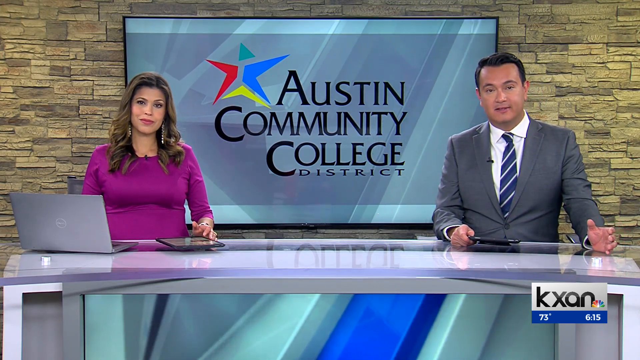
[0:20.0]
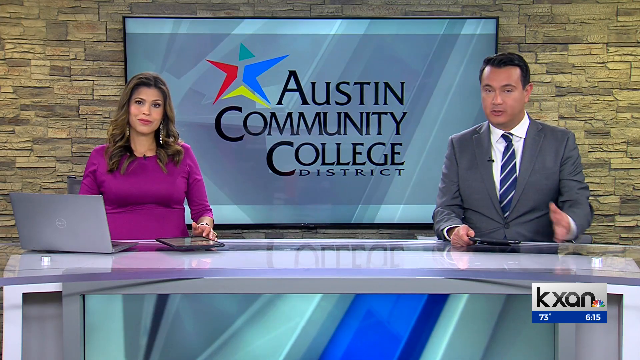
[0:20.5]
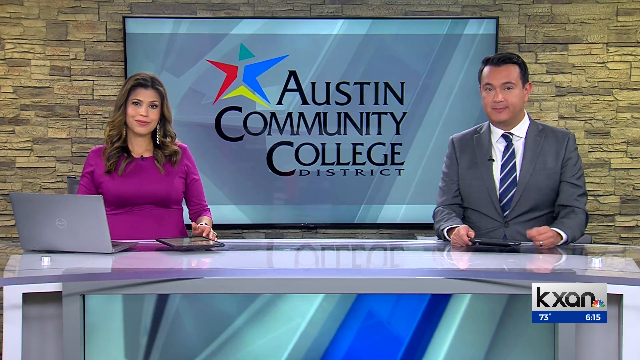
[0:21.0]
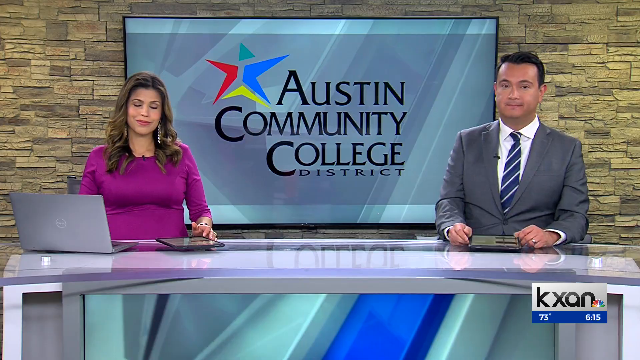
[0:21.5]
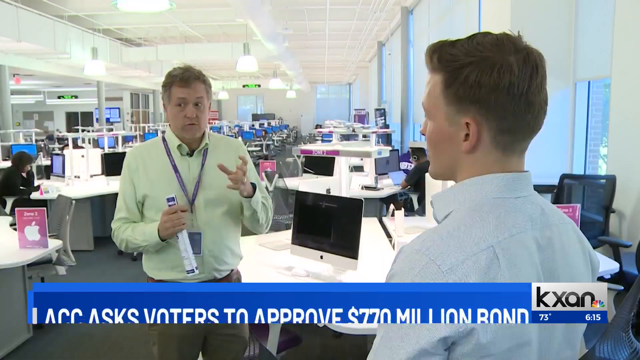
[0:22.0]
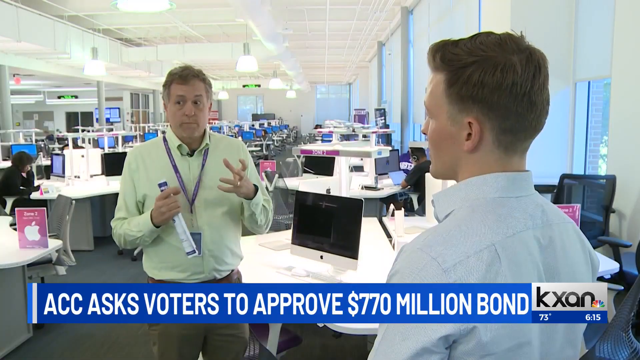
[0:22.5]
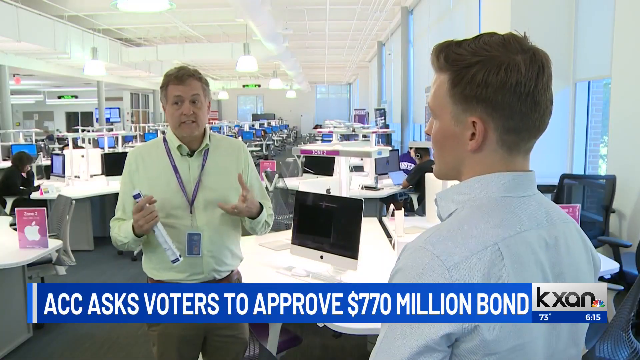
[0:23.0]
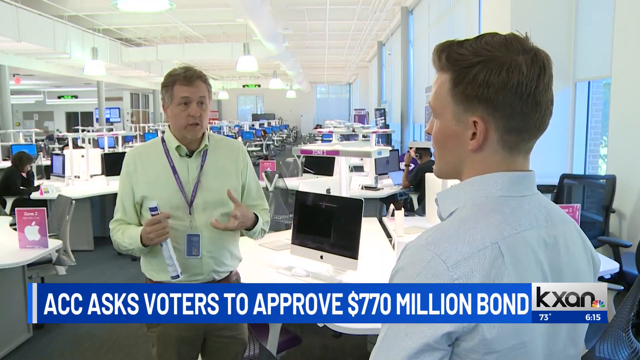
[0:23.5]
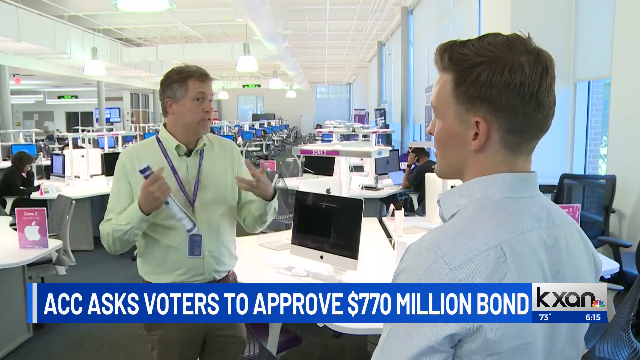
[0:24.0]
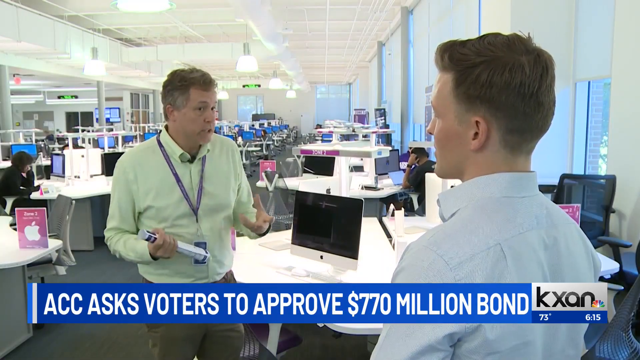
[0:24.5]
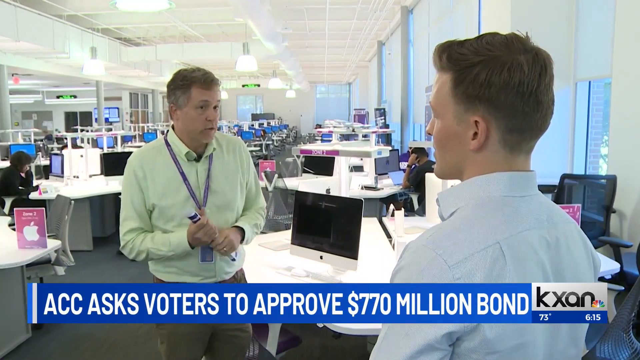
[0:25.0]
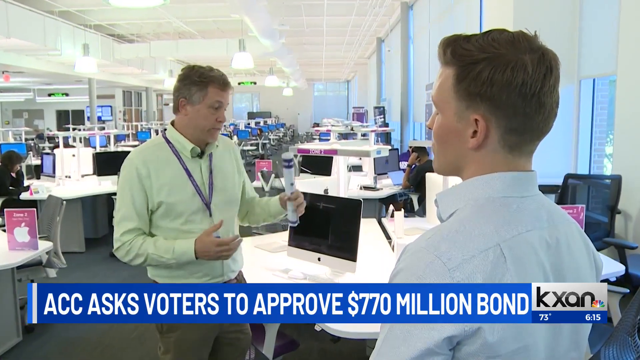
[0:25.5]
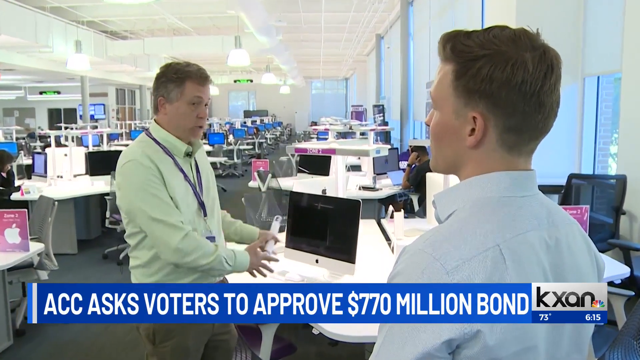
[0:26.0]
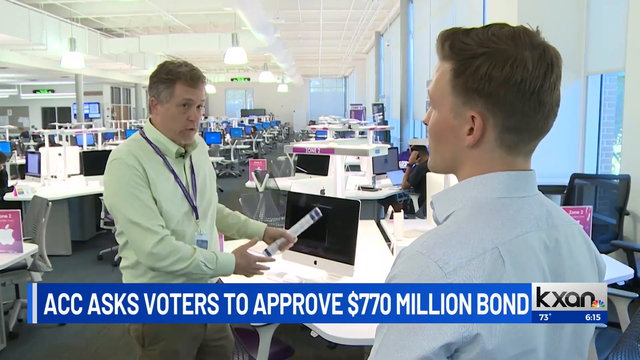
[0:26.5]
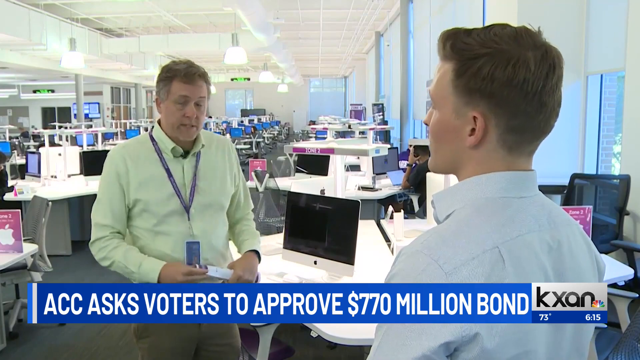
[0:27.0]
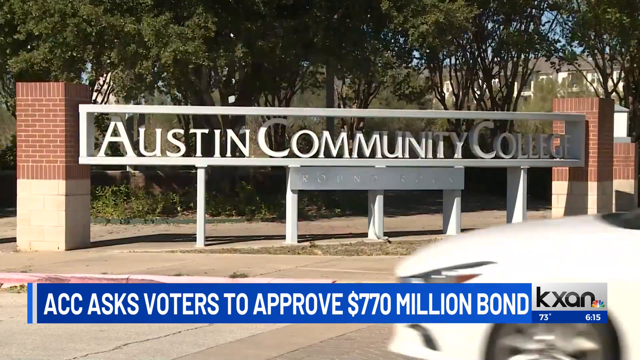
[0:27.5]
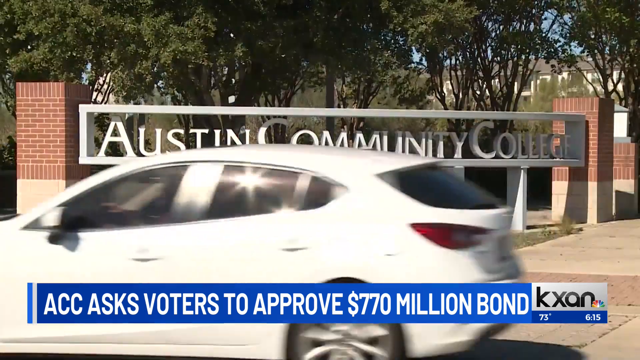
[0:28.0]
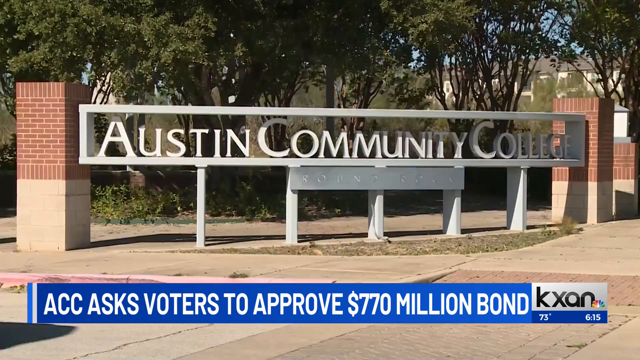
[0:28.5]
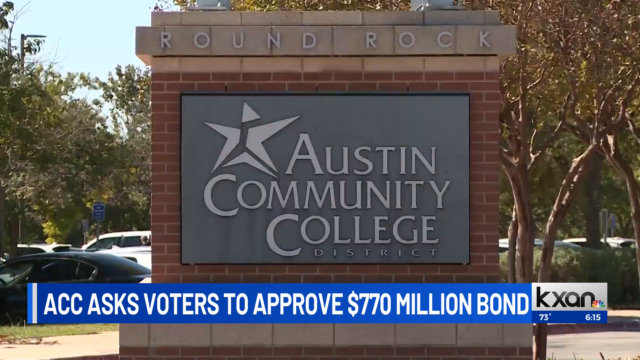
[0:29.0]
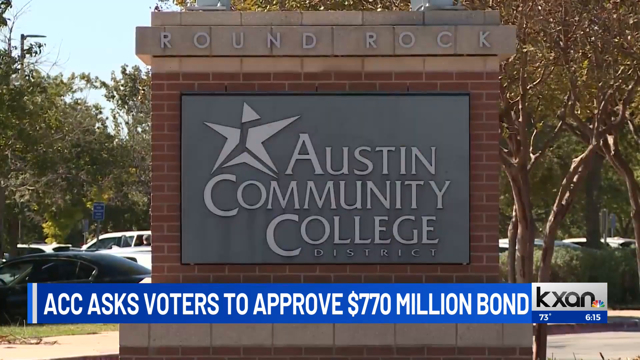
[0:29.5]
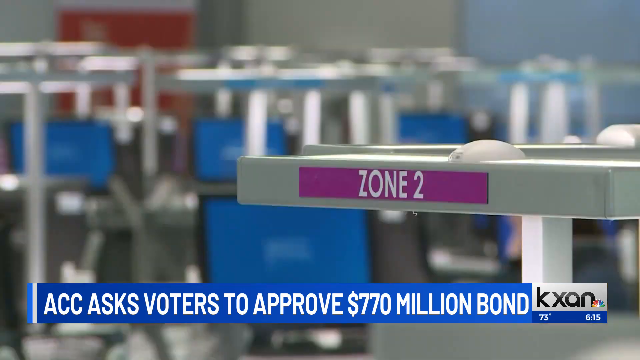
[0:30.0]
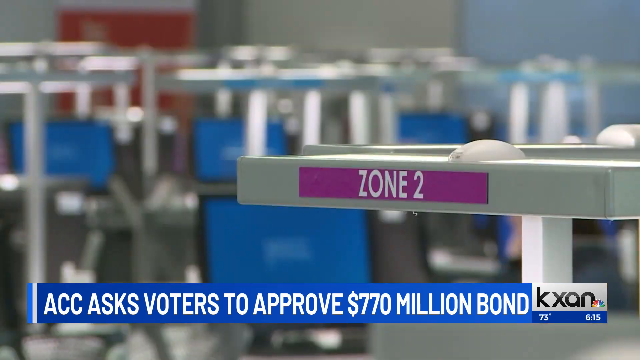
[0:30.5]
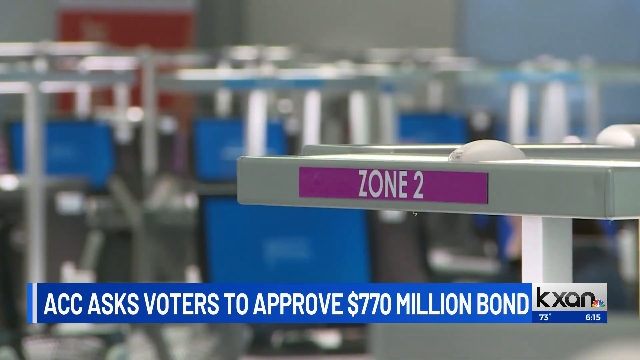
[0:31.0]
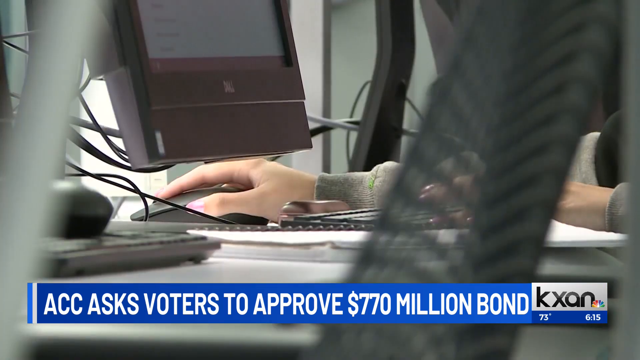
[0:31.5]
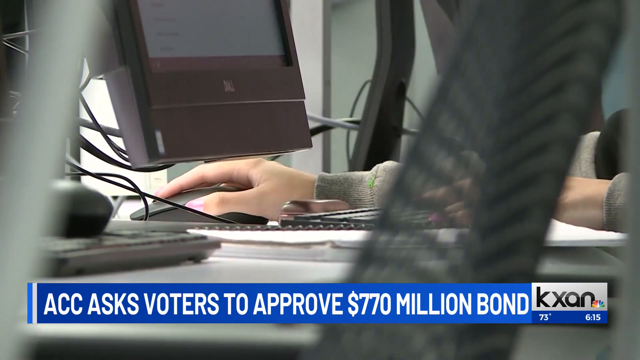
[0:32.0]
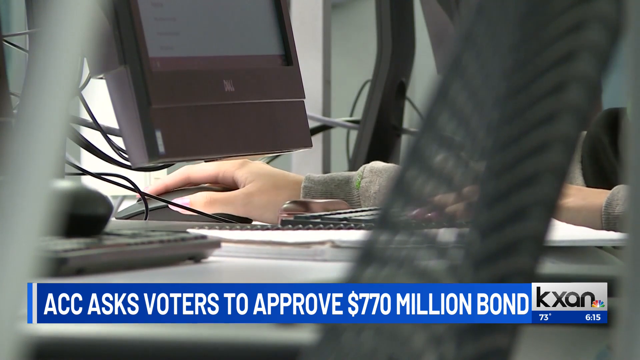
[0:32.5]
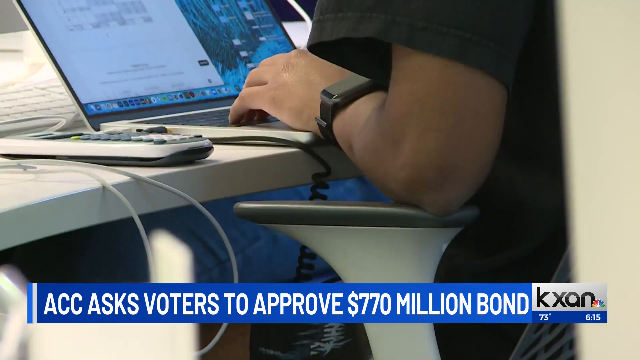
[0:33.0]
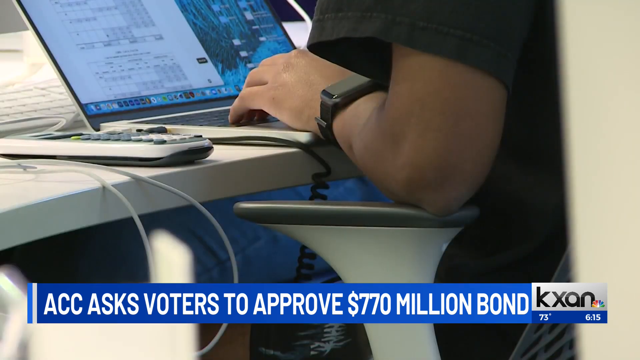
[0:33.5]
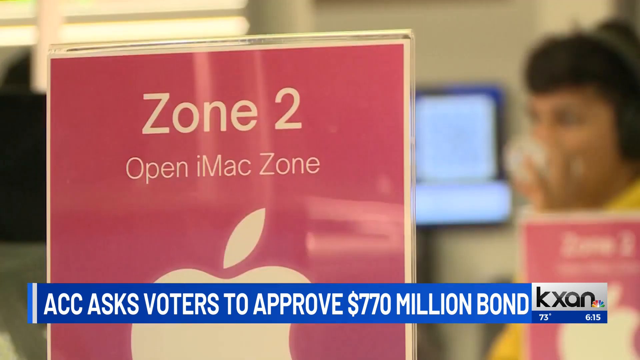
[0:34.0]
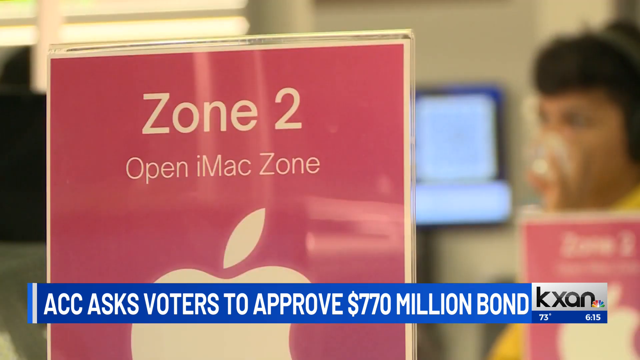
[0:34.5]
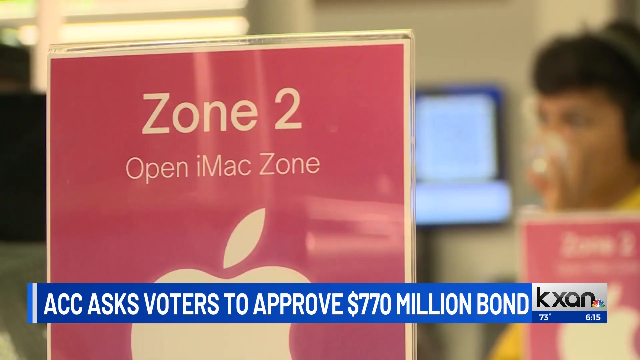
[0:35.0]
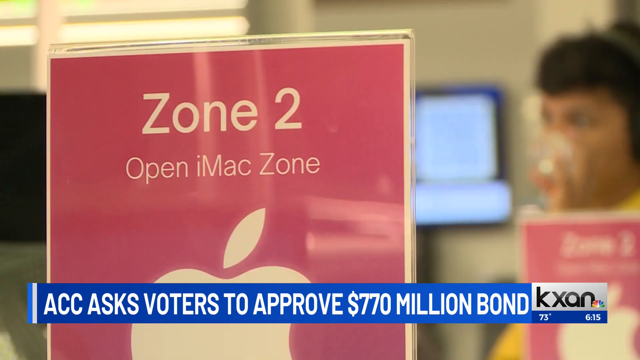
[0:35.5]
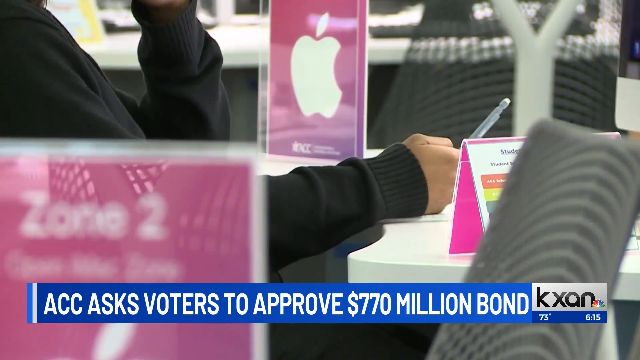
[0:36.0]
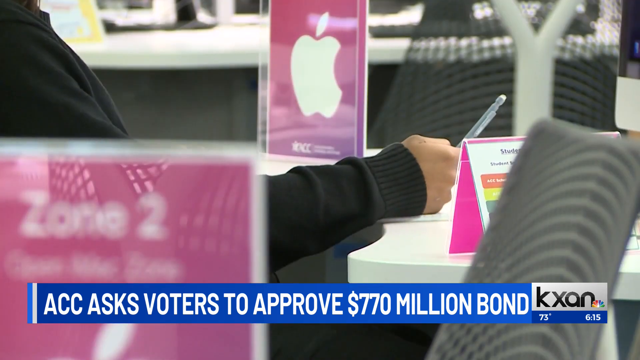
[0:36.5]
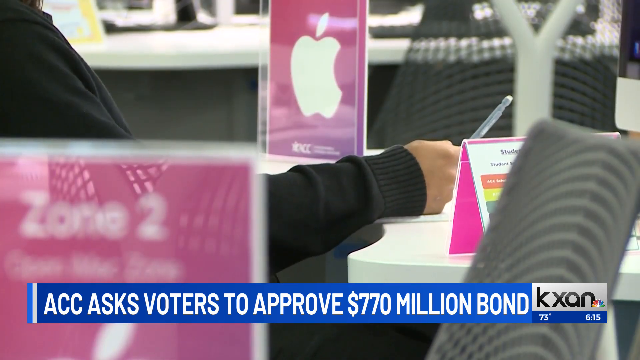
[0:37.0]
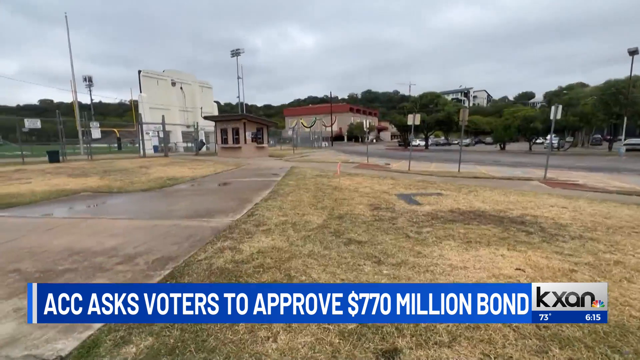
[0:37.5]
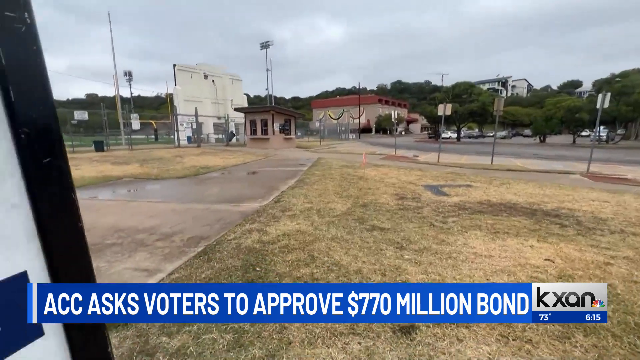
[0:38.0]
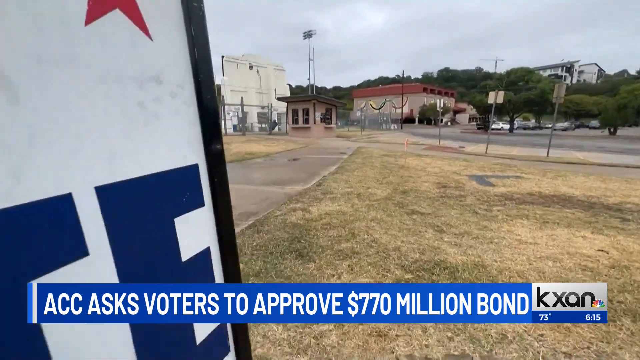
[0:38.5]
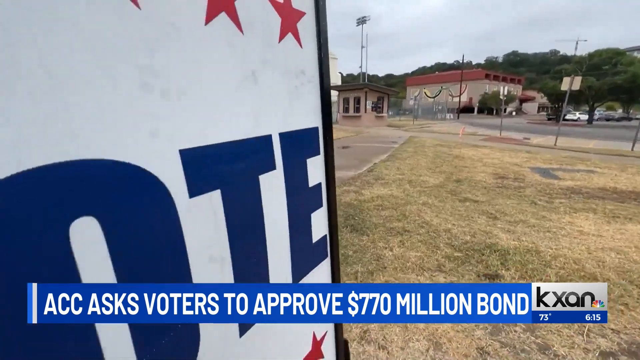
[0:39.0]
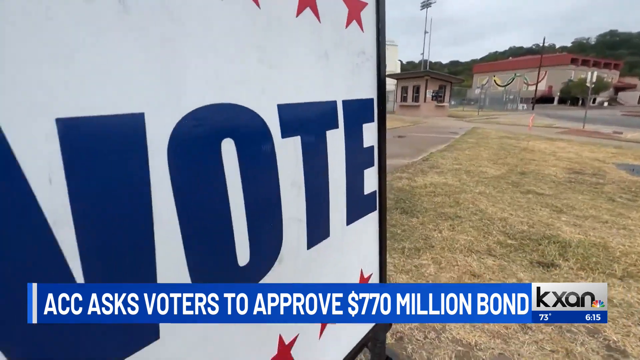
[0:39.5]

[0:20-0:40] In a well-lit indoor news area, a tight shot shows two newscasters at a newscasting desk. The back wall is made of a light-colored, brick-like material, and on it is a huge television screen or monitor showing colors of blue. In the center is a cut-out graphic of the state of Texas with a blue star in the middle of it. At the top are the words "your local" in red, with the blue star in the middle of them. Underneath, in big blue letters, is "election," with two lines above and below it, and at the bottom is "headquarters" in red lettering. The newscasters are on each side of the screen. On the right is a man in a gray suit, white shirt, and blue and white tie, with a tablet on the plexiglass desk they sit at. On the left is a woman newscaster wearing fuchsia, with an open laptop and a tablet on the plexiglass. Her name is Britt Moreno, and the man's name is Daniel Martin. At the bottom right are the news call letters KXAN and the NBC peacock logo, and underneath are the weather and time: 73 degrees and 6:14. In the next scene, the screen says "Austin College," and "Austin Community College District" is written on it. A star is made of differently colored pieces: a smaller green point at the top, a blue piece with two points on the right, a yellow piece with two points or legs at the bottom, and a red piece with two points on the left. The pieces are split but together would form a star. The video then moves to another area that looks to be an indoor office building, possibly Apple, as an Apple logo is on one of the tables. The office is well lit, with a lot of lighting in the ceiling and many windows looking outside; some shades are open and some are closed. Some people sit at some of the desks. The aesthetic is very white: the desks and computers are white.